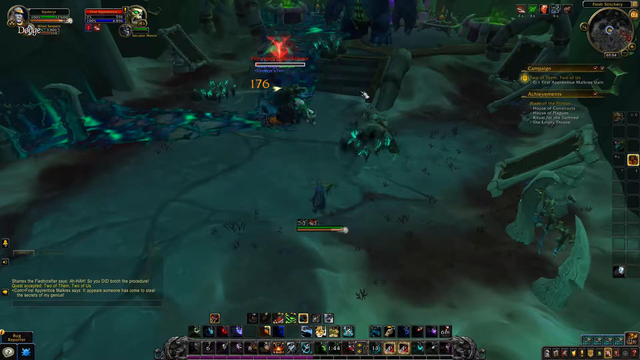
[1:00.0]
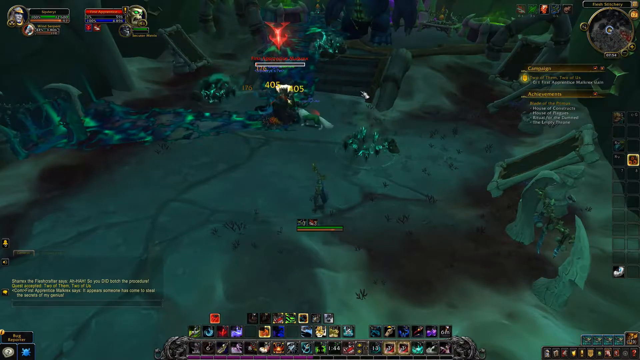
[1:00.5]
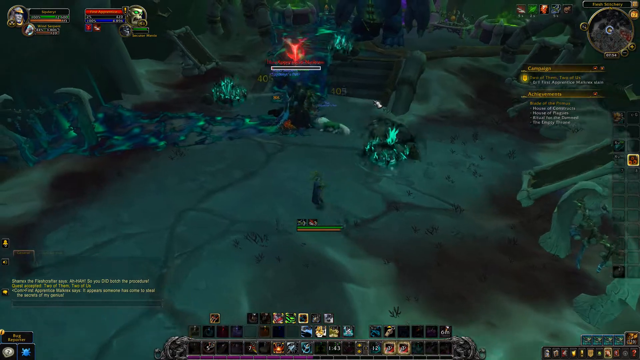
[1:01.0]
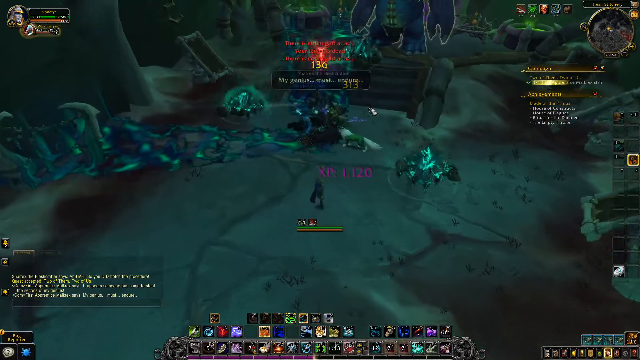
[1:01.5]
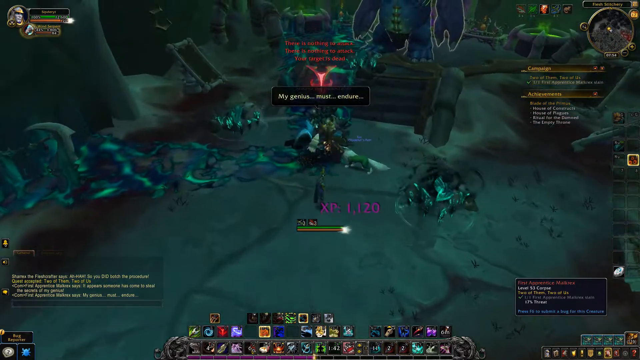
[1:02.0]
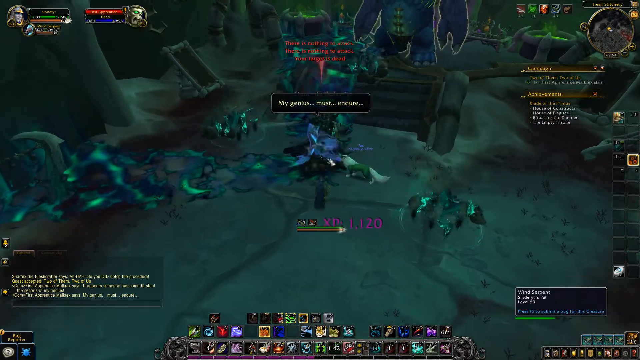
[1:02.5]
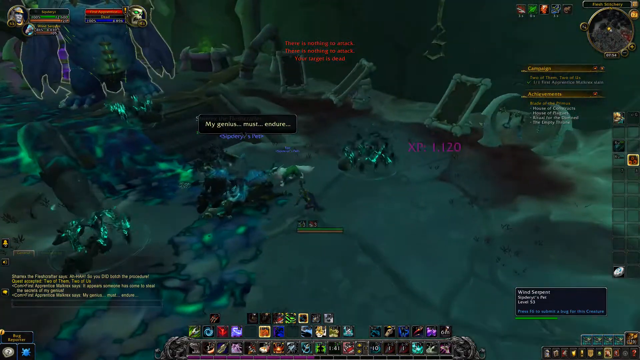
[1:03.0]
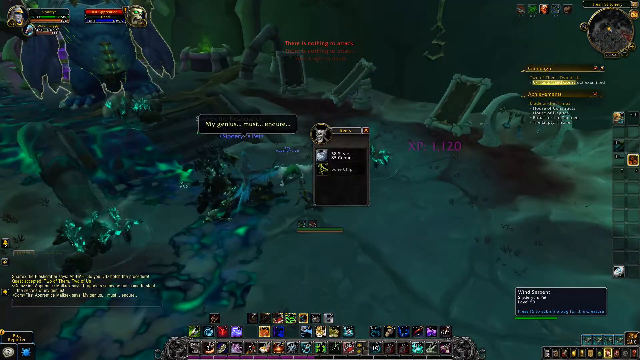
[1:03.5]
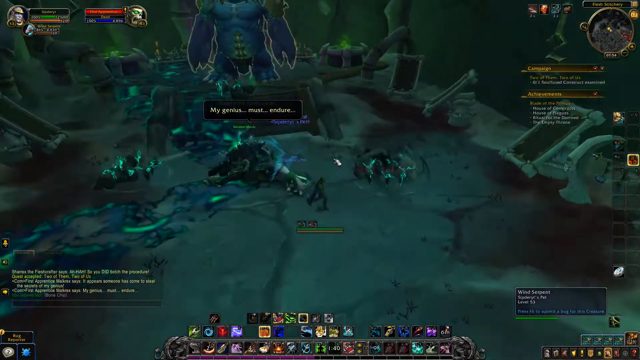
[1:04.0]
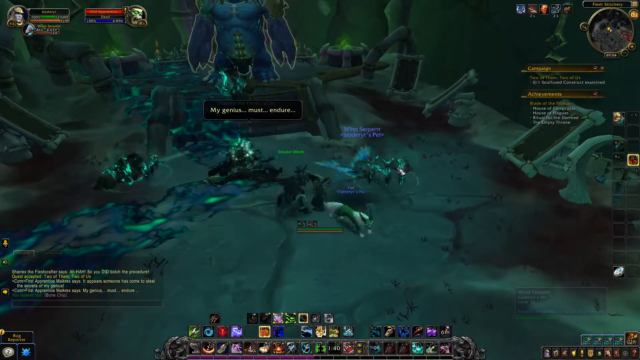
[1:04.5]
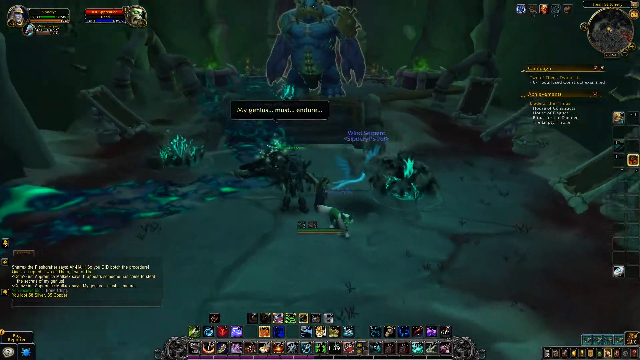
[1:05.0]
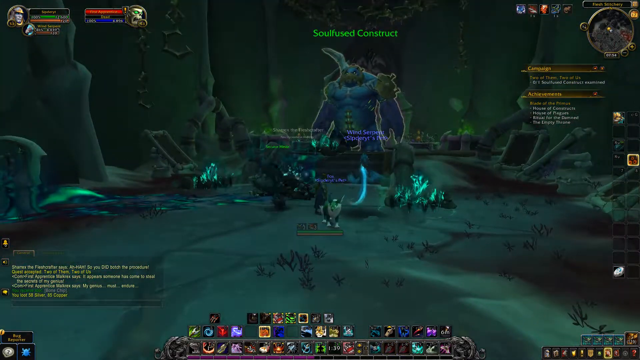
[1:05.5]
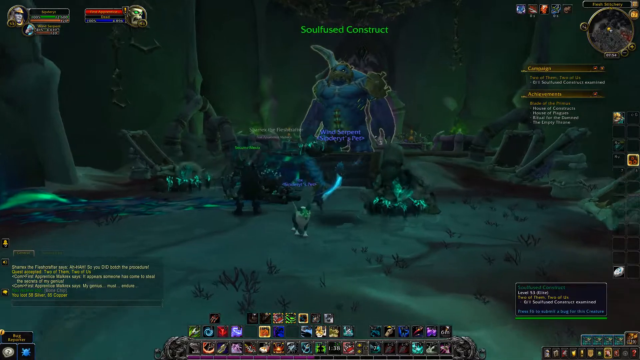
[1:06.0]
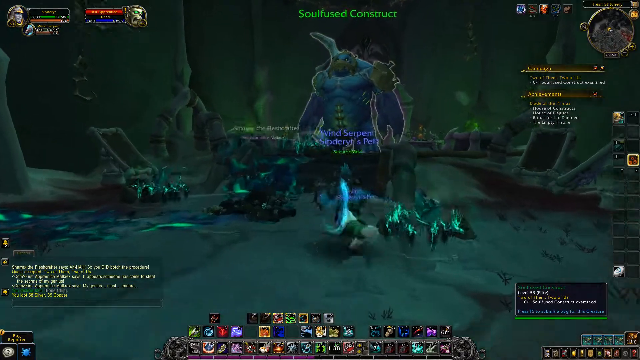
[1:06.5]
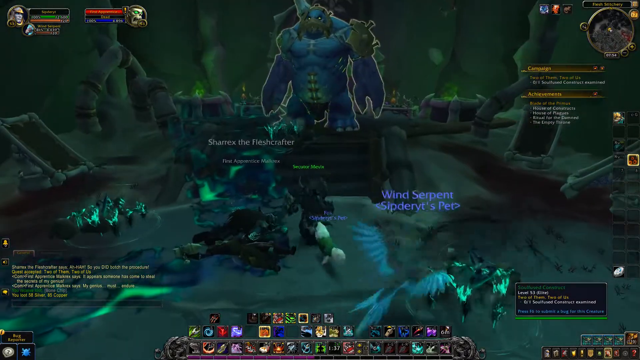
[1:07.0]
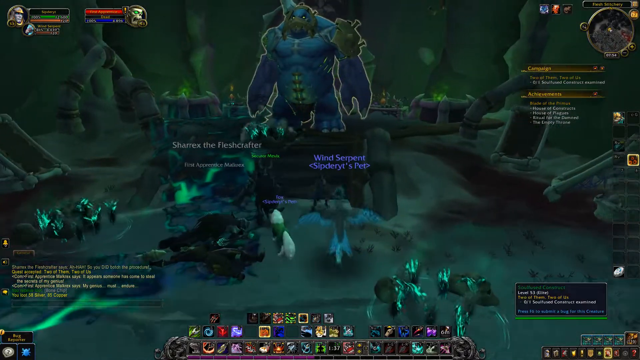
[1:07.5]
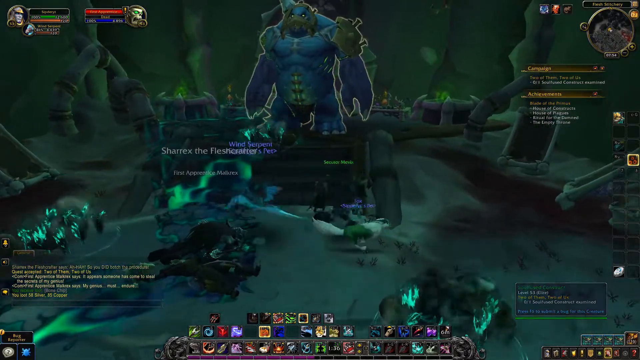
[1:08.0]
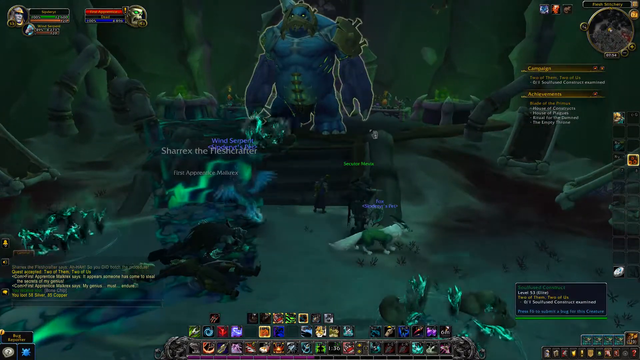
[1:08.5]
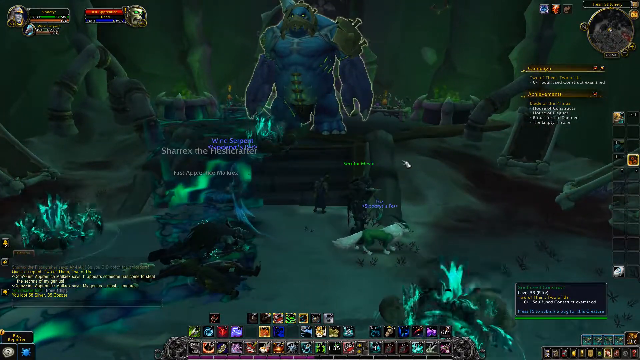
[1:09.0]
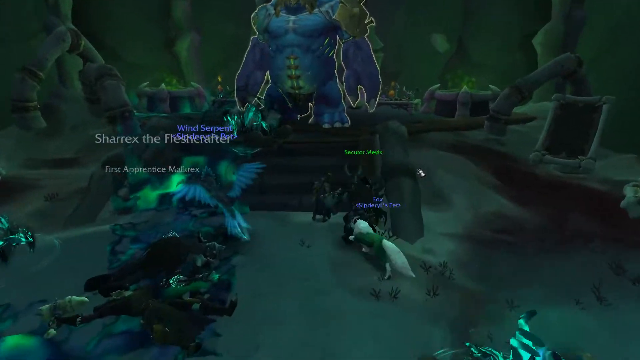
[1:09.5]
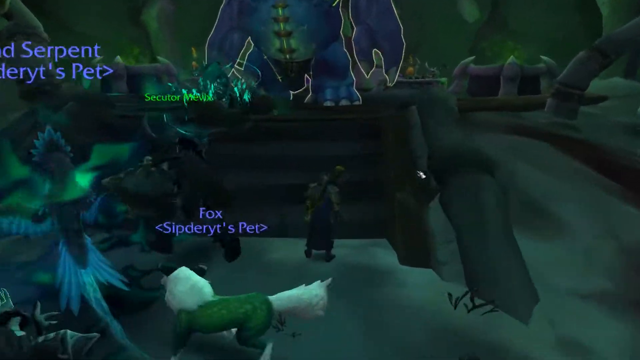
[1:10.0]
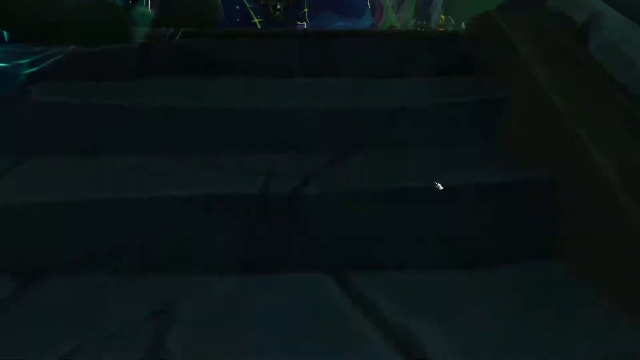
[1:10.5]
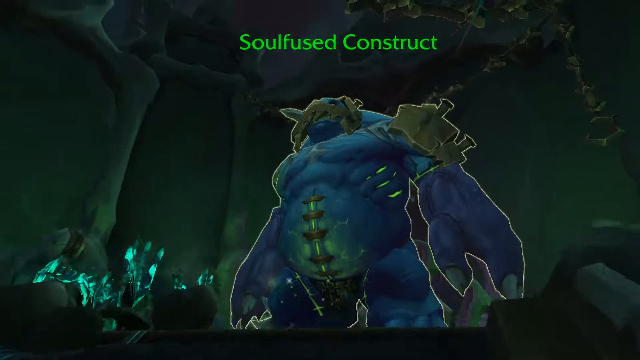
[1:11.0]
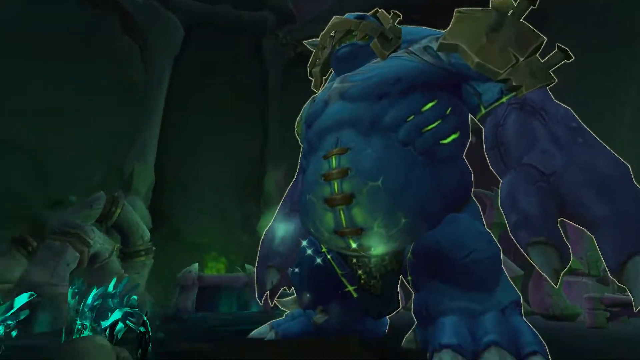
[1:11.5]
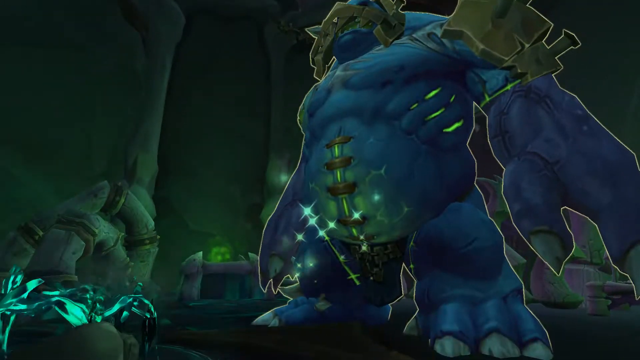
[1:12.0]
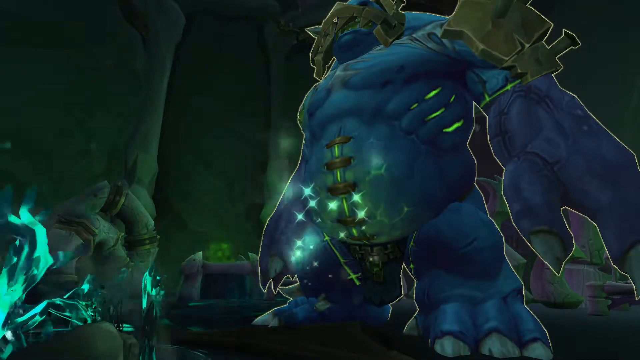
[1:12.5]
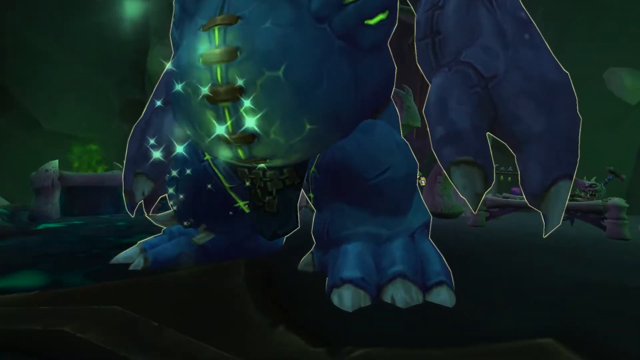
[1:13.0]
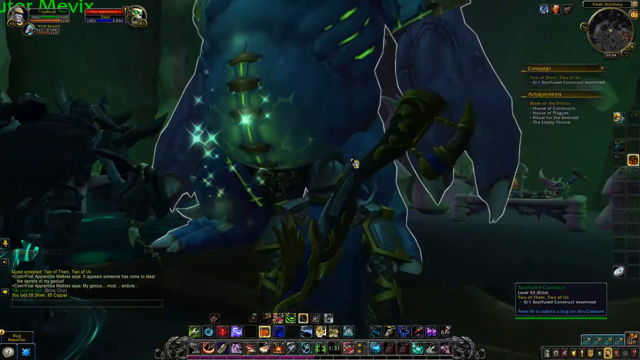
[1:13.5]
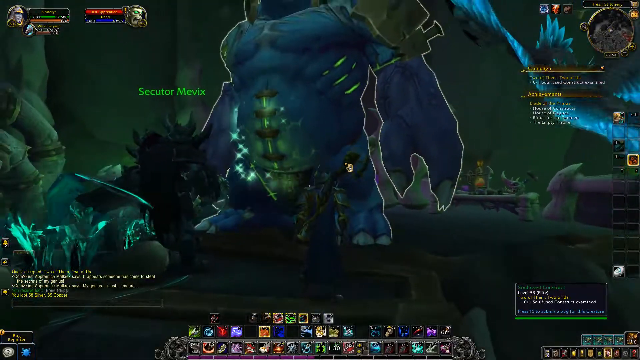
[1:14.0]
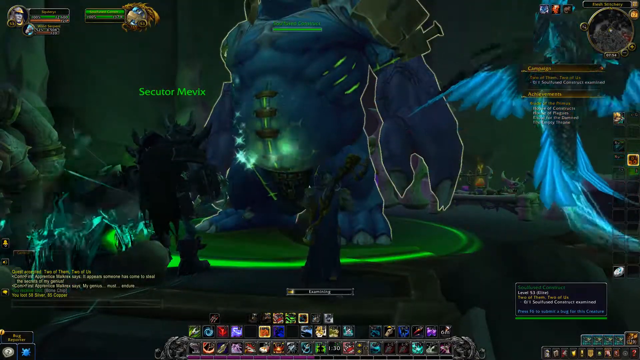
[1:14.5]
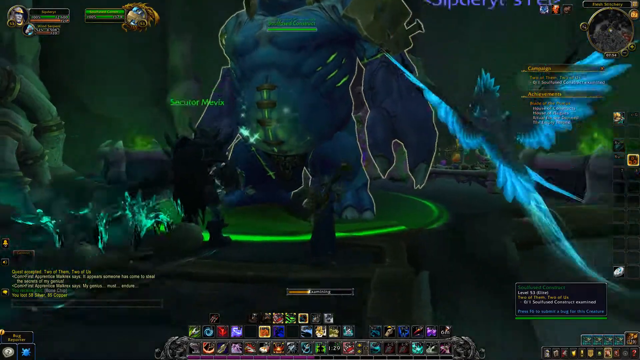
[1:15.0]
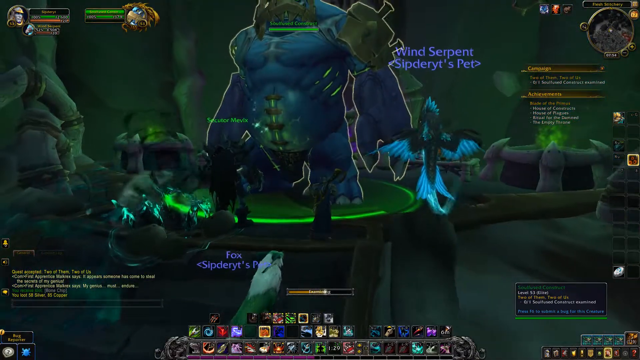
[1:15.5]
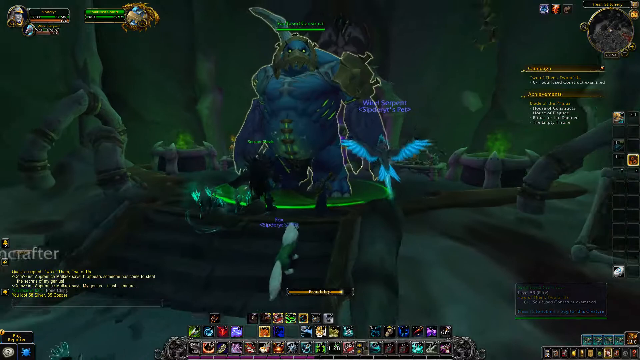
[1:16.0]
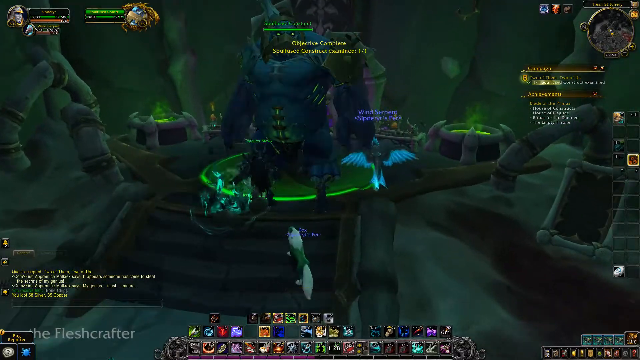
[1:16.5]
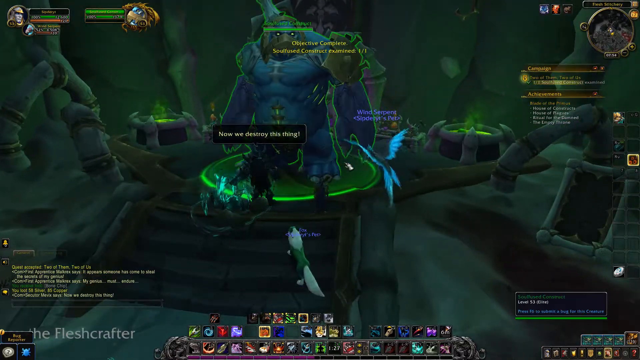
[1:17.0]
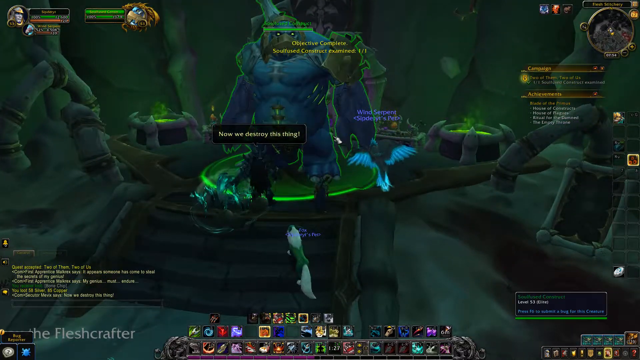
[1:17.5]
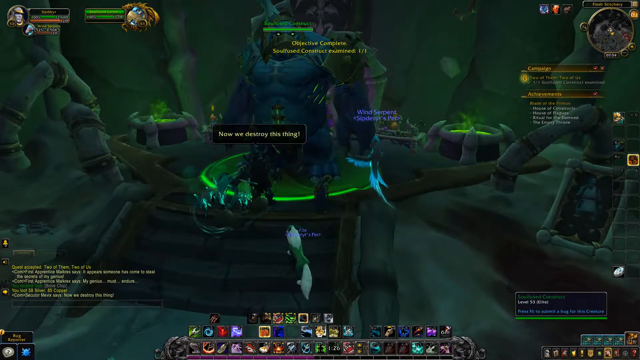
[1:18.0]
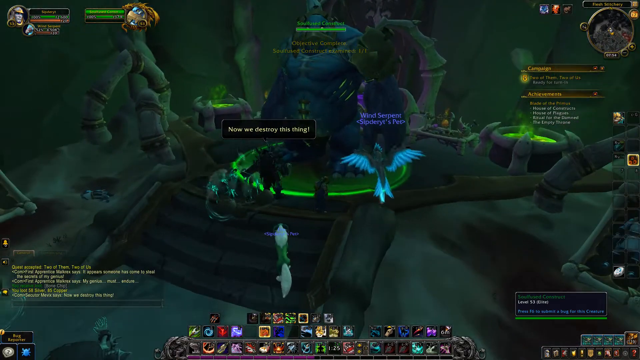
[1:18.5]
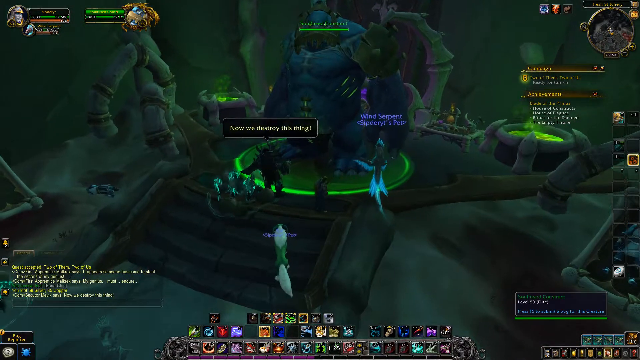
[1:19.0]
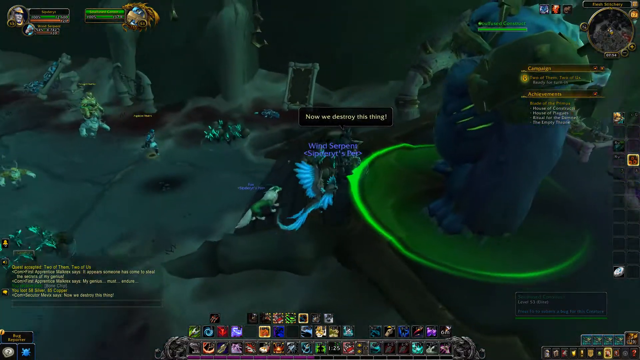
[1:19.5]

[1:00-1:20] More fighting follows as the main character gets a little closer and does a little more fighting, with their animals back with them. They then move. A close-up shows a huge boss, like a big blue giant, with a bit of armor on his head and around his arm and something like a stitch going up his stomach. The insides of the beast are green, with green stuff growing out of his body, and his nails are long. The little magician has about four animals around them that he or she apparently controls. No fighting begins before the shot ends.